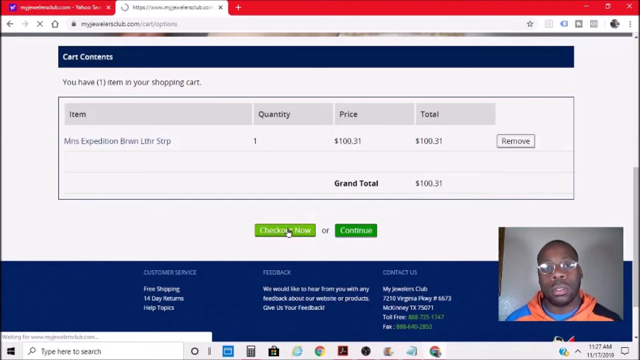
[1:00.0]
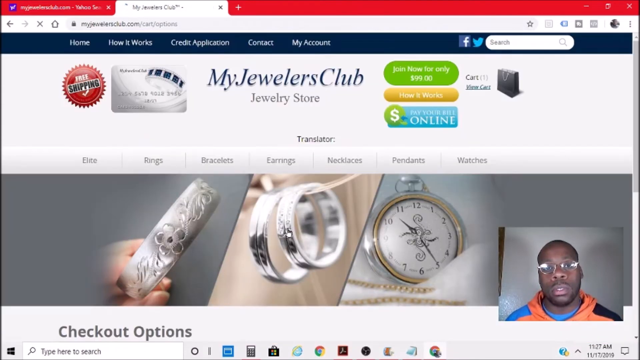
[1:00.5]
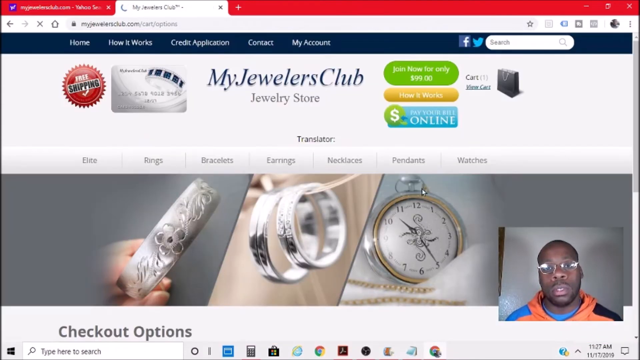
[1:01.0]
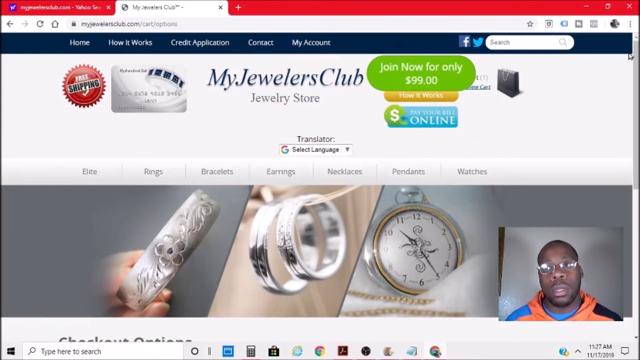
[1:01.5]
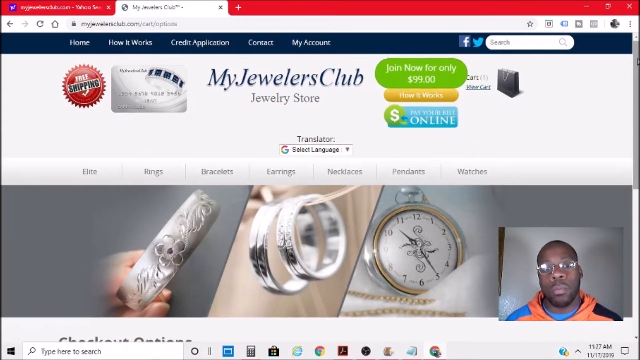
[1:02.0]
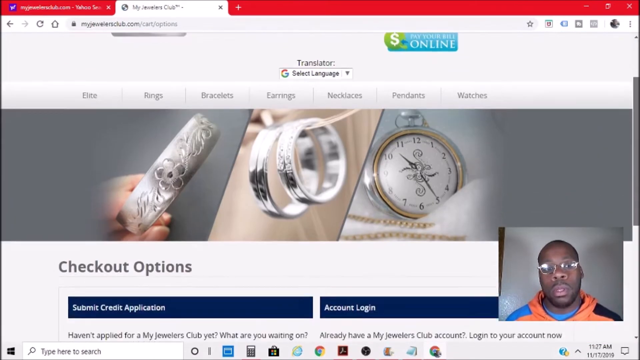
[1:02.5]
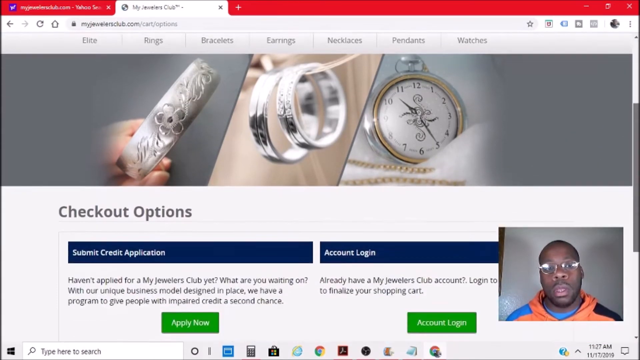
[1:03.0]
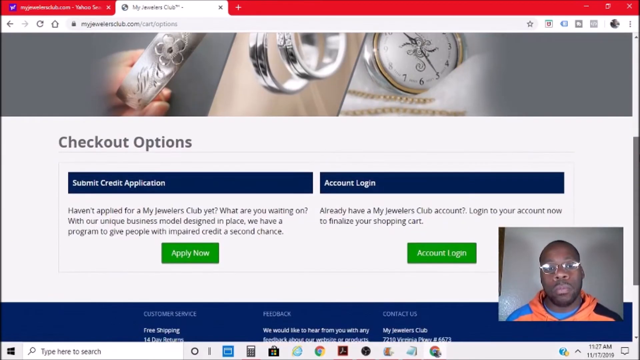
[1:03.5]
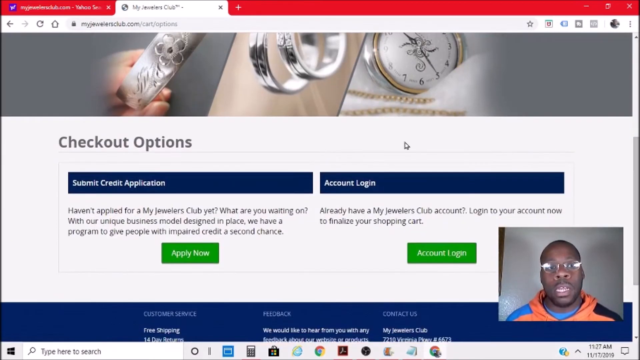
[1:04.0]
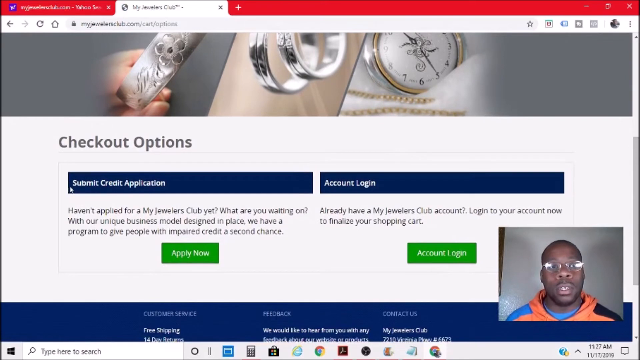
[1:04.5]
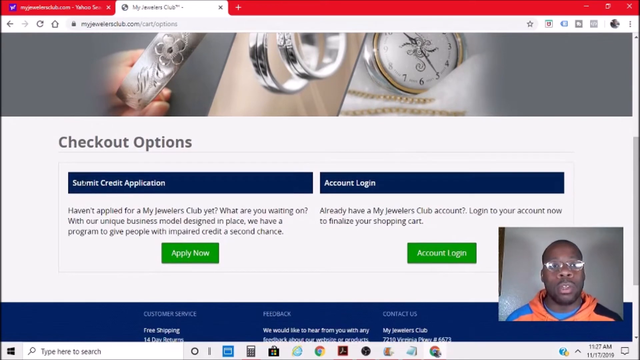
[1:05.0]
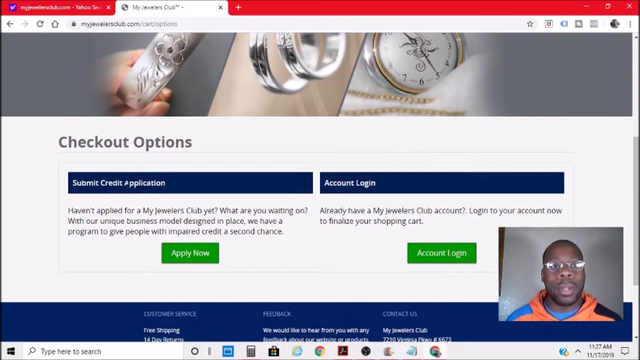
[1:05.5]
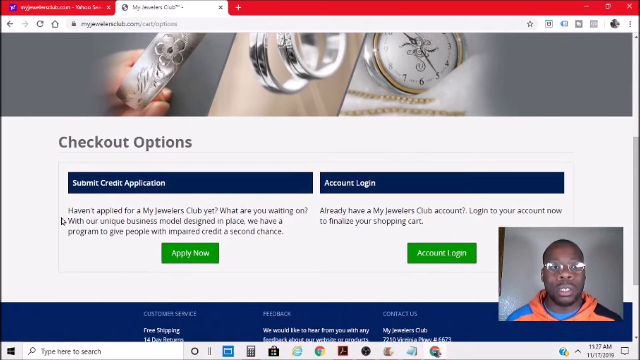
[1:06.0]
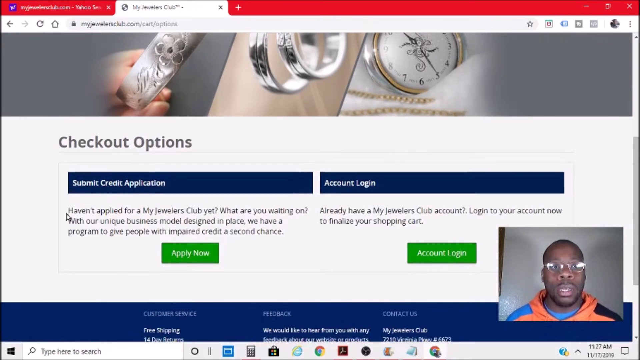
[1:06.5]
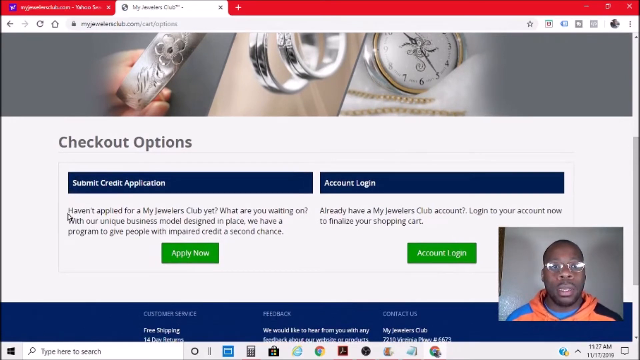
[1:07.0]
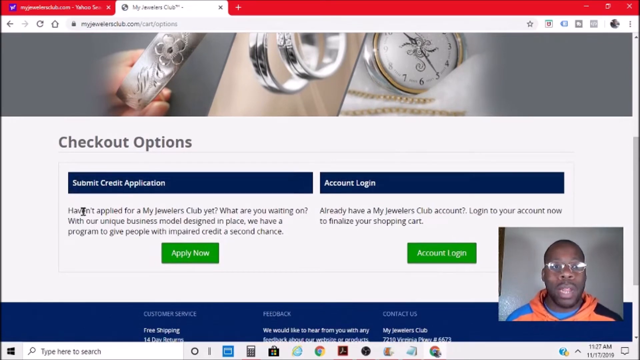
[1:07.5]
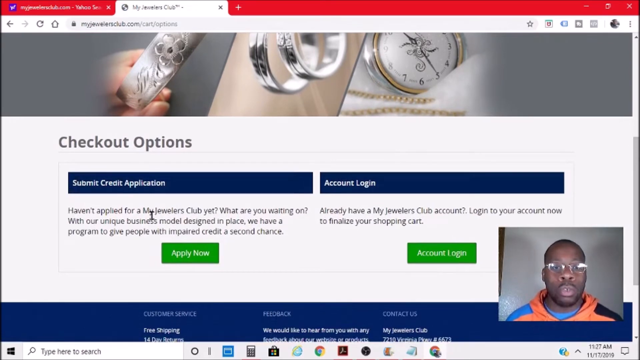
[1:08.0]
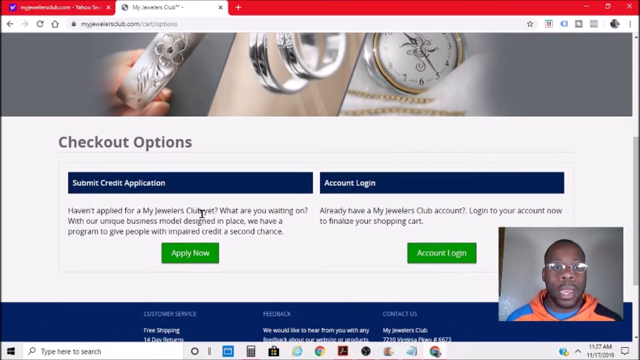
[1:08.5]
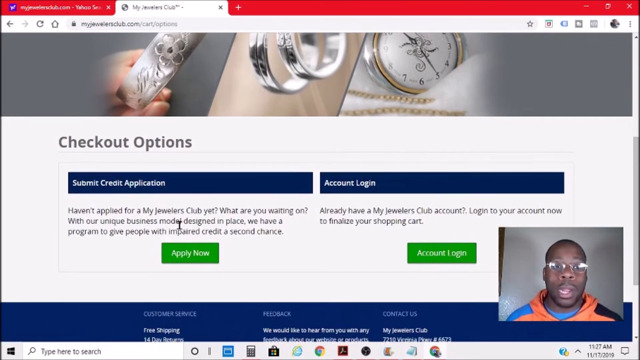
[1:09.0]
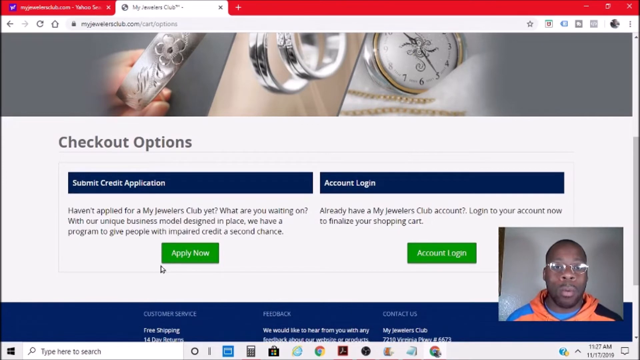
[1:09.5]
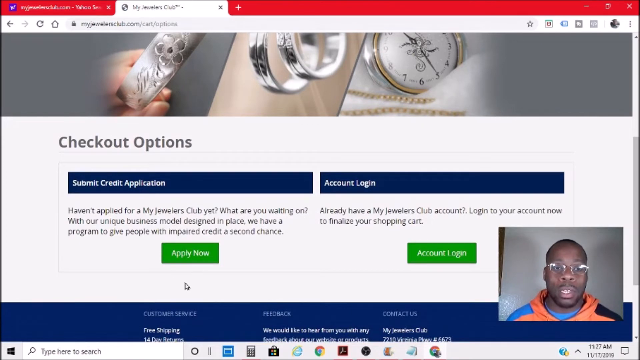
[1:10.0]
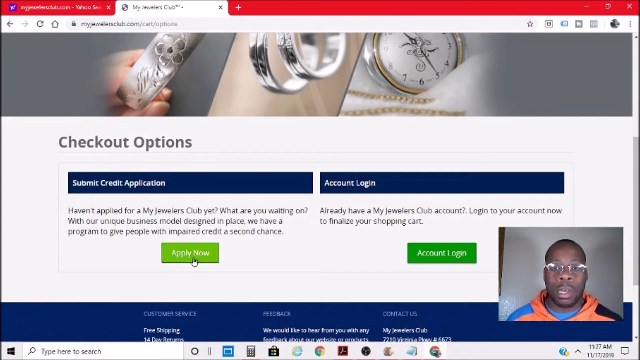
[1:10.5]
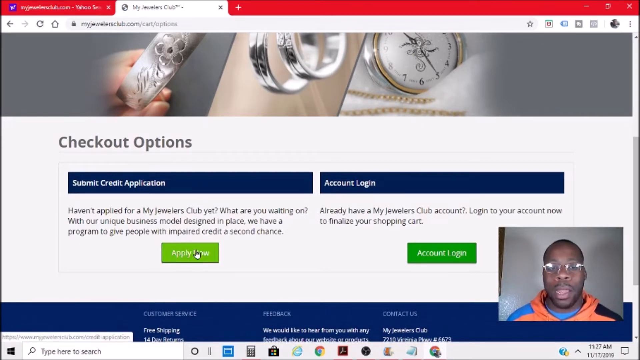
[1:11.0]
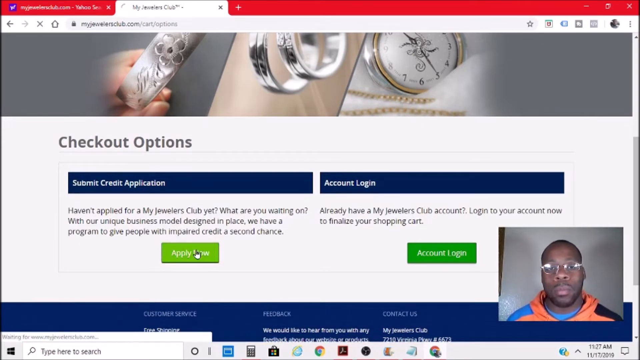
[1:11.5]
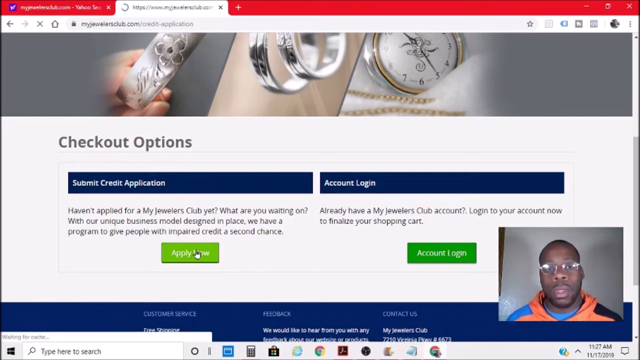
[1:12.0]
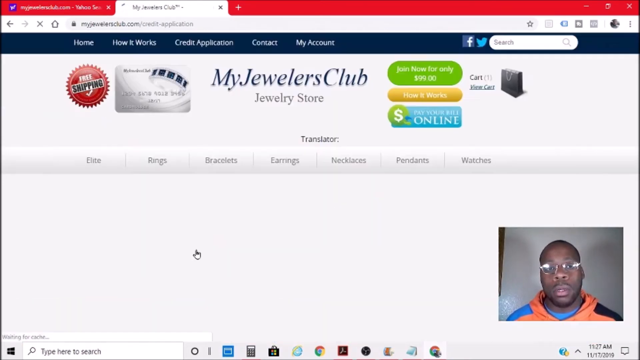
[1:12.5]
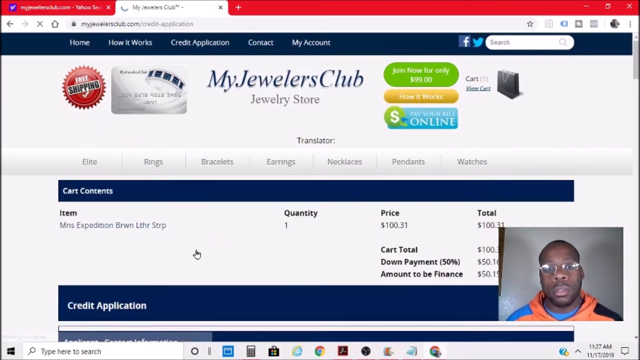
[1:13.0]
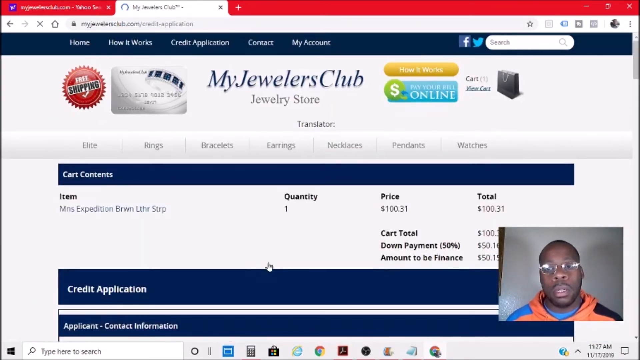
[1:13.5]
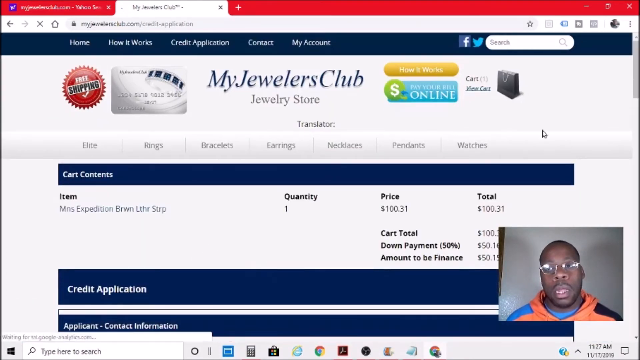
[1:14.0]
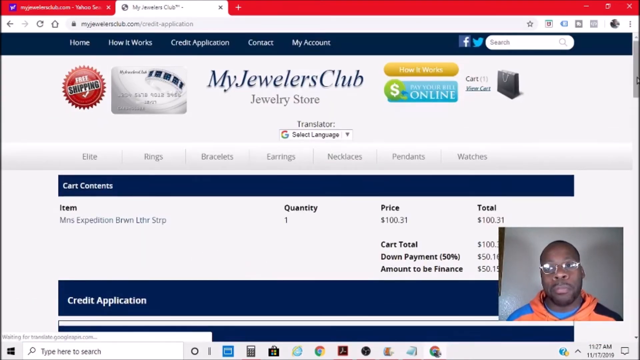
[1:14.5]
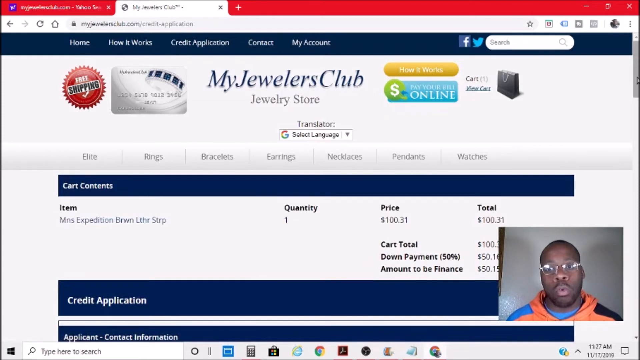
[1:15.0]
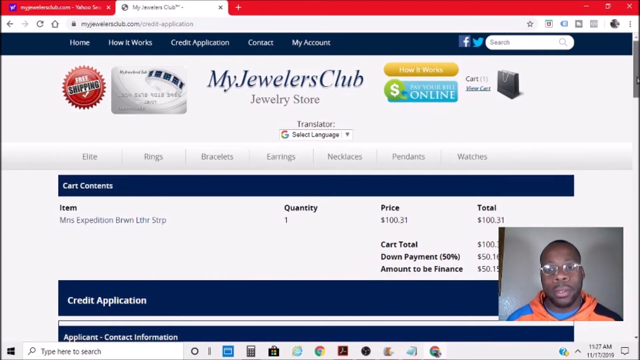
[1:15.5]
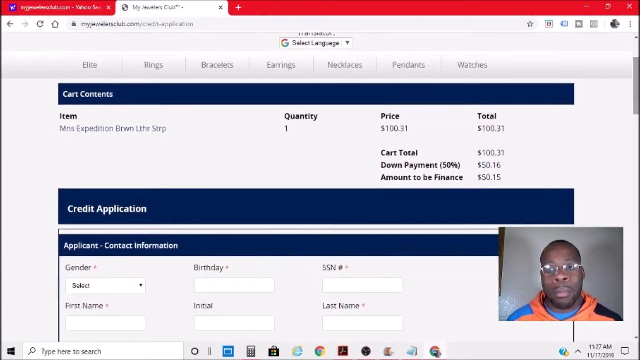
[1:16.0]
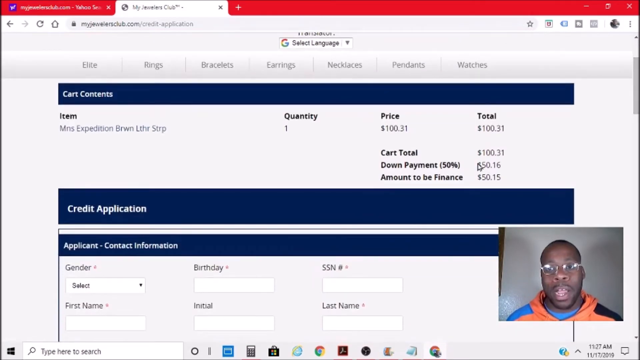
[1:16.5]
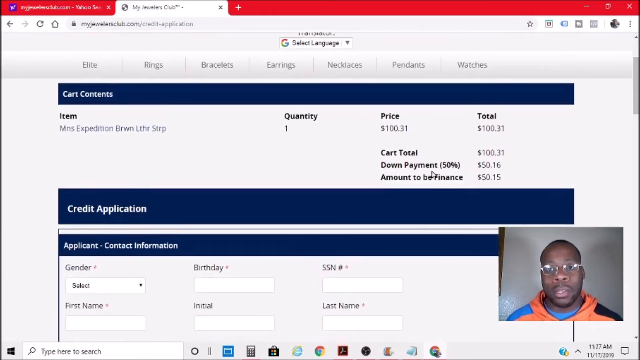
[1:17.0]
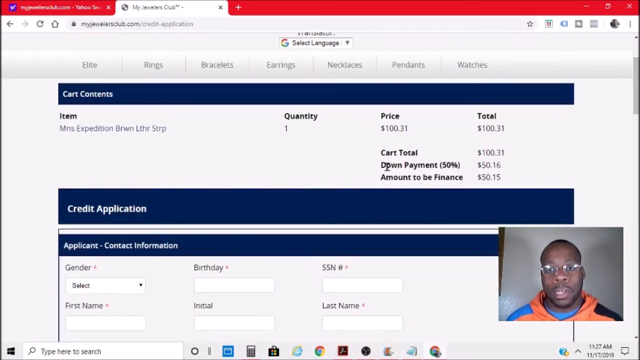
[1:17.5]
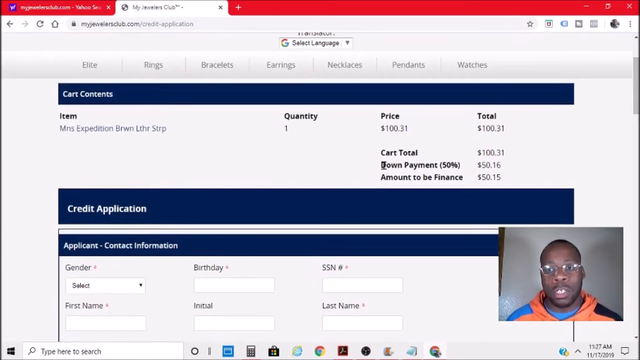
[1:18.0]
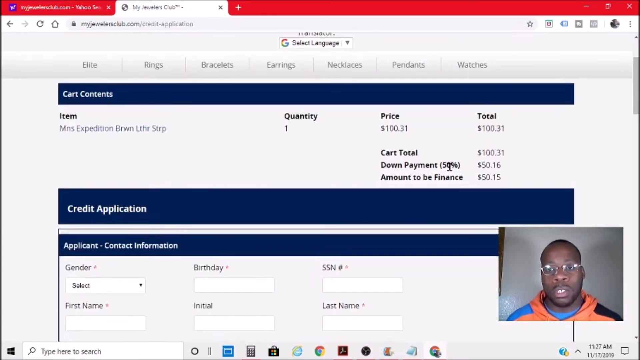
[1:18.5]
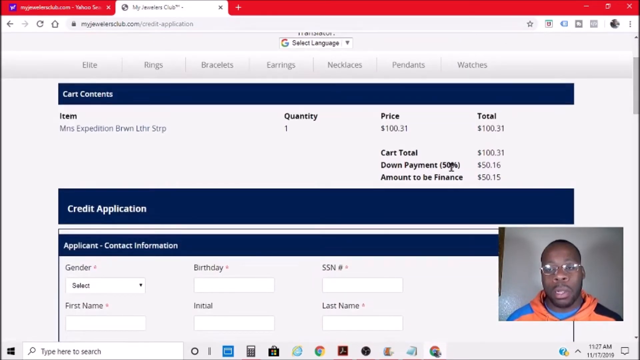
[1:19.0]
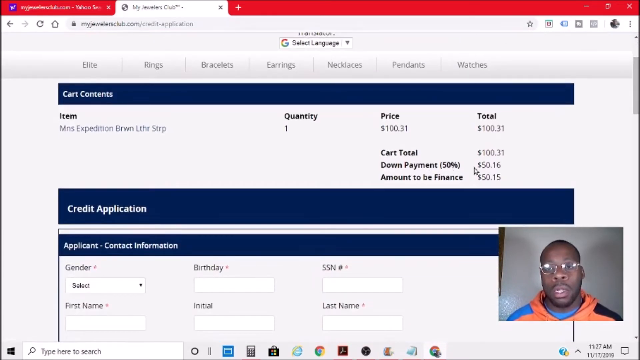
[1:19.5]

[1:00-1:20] The My Jewelers Club website is open, with the browser visible. Someone has found a watch they like and scrolls down to the checkout options, the cursor moving around in that area. A black man wearing an orange sweatshirt and glasses speaks live in the lower right-hand corner. The person clicks the checkout option showing the price, the total price and the down payment, and then an invoice for the watch appears. The watch has a brown band and a big face. The man keeps speaking but is less animated than before, and the cursor keeps moving around after the checkout and invoice.